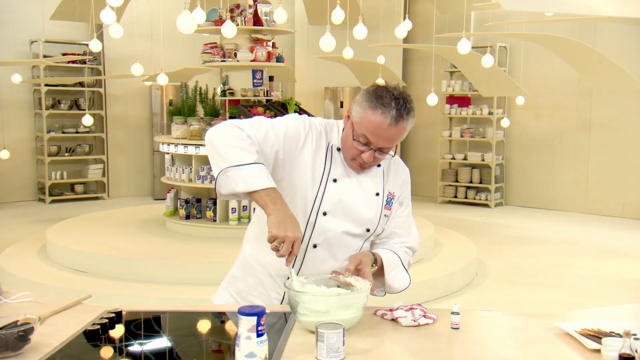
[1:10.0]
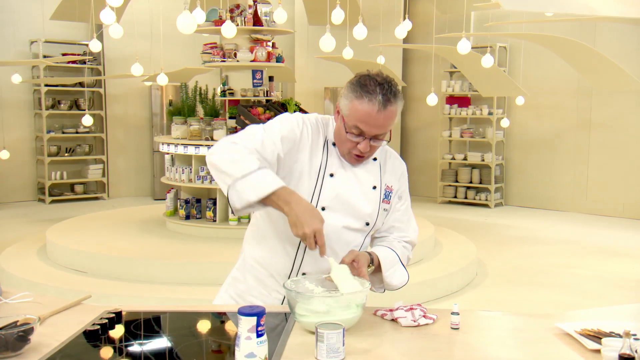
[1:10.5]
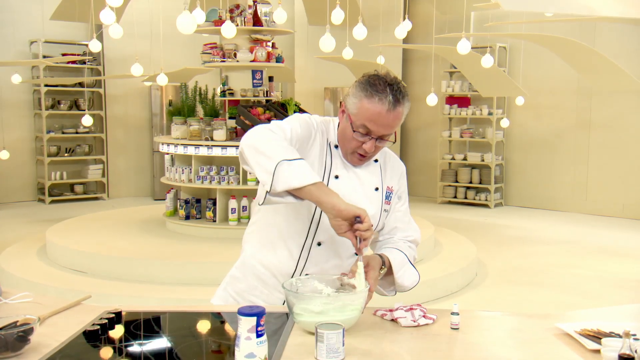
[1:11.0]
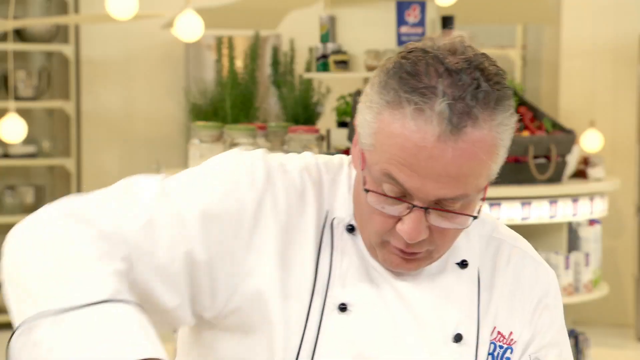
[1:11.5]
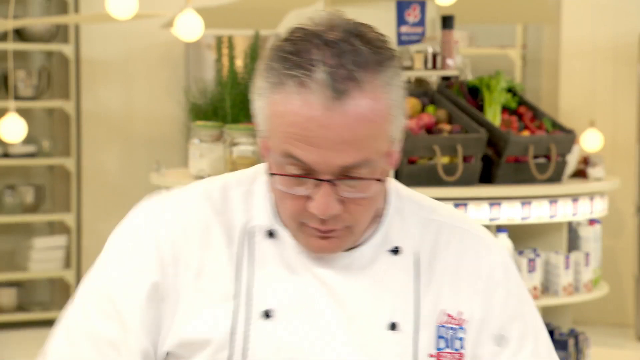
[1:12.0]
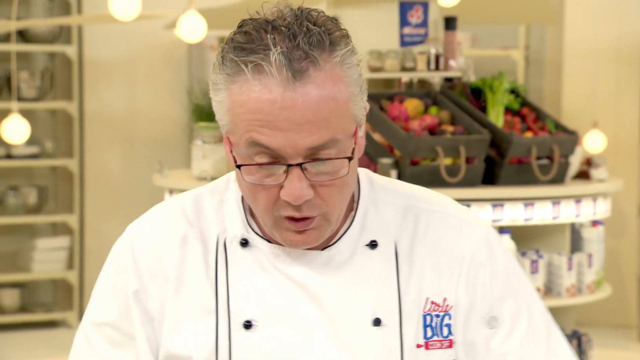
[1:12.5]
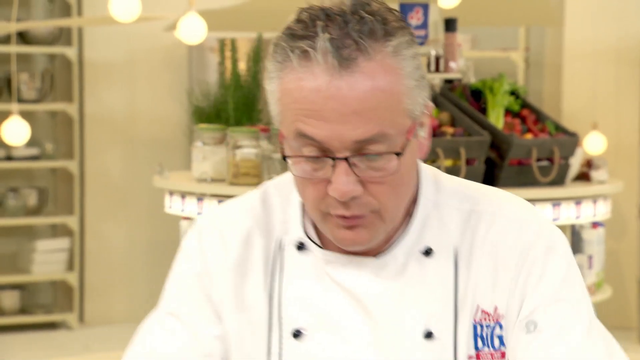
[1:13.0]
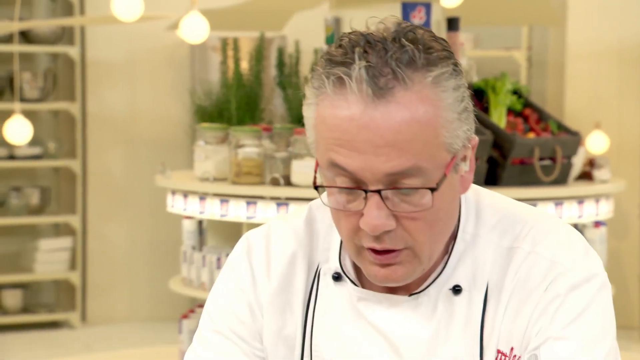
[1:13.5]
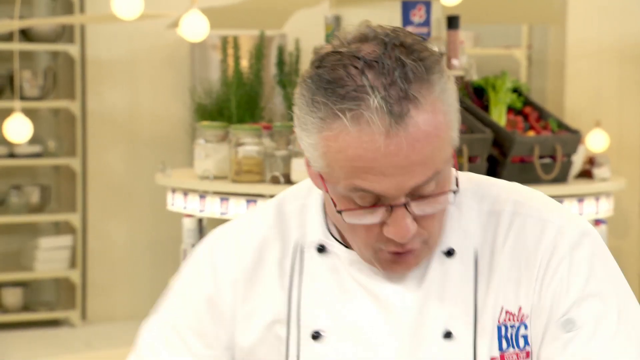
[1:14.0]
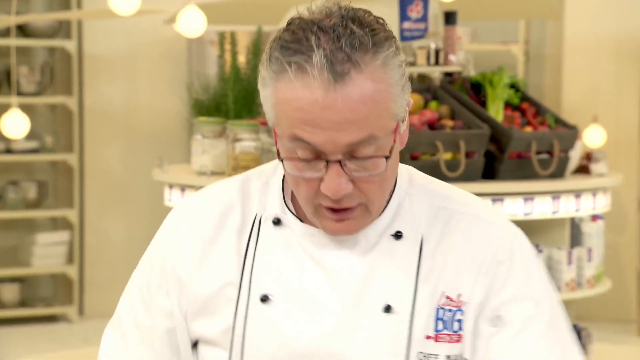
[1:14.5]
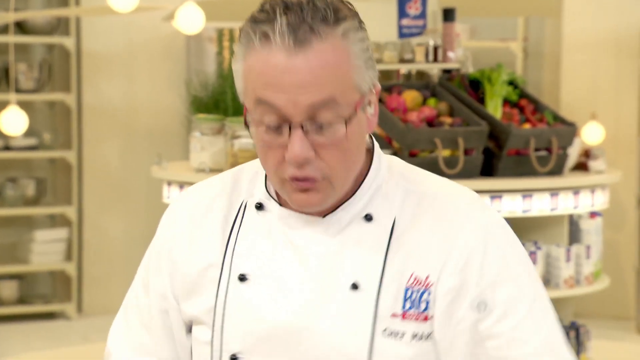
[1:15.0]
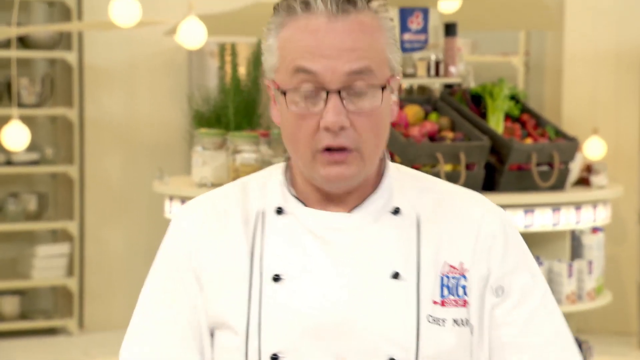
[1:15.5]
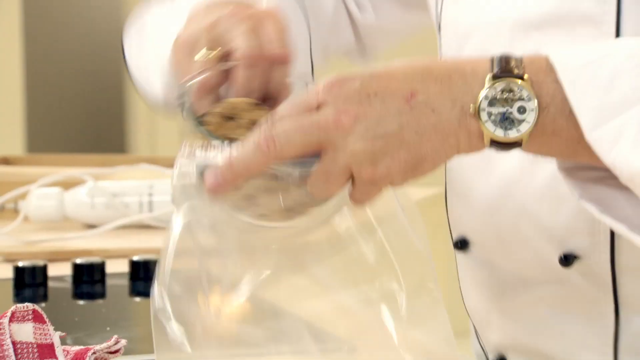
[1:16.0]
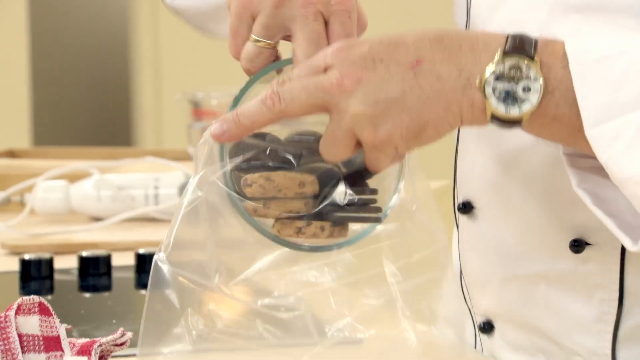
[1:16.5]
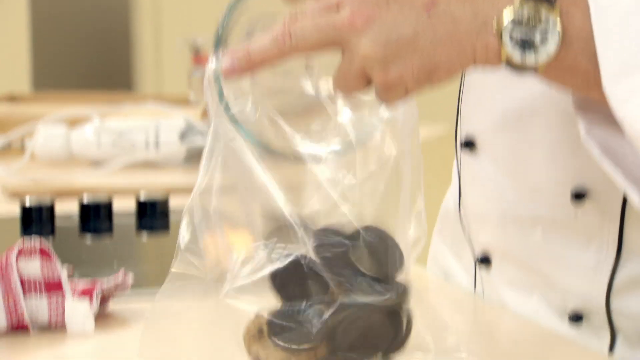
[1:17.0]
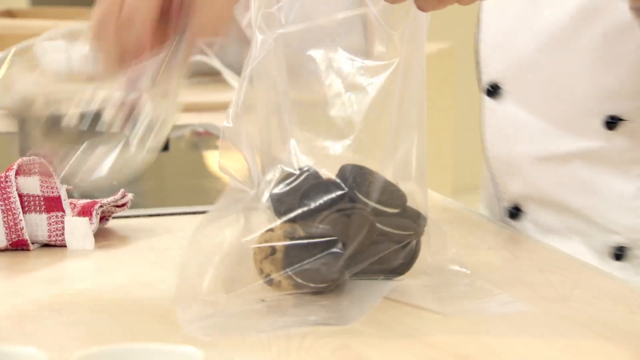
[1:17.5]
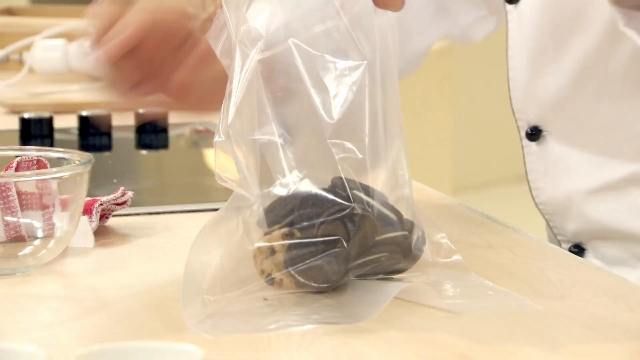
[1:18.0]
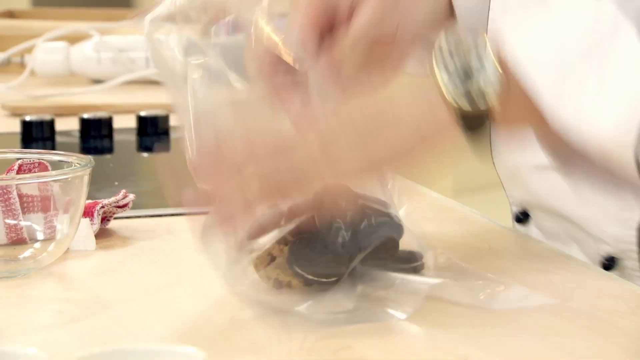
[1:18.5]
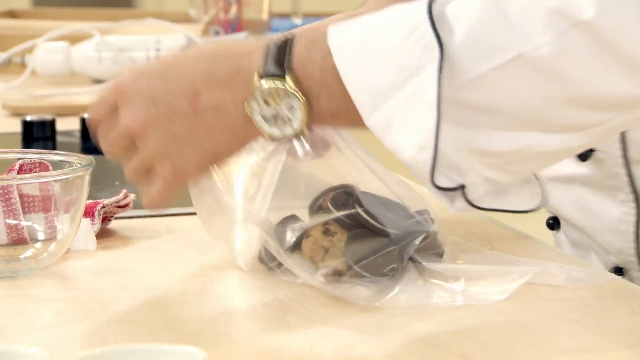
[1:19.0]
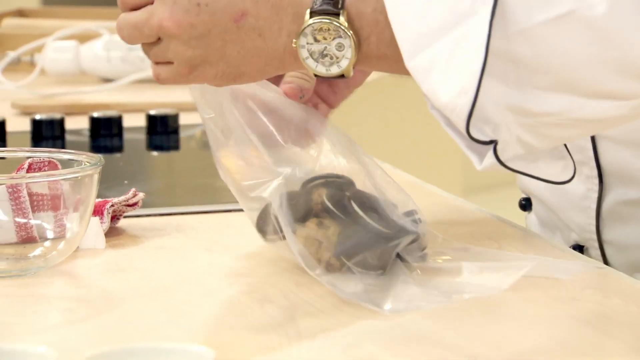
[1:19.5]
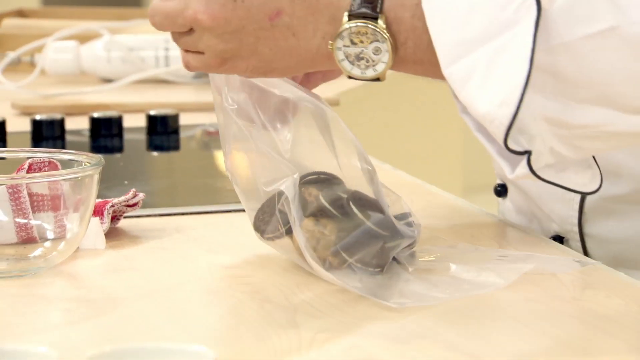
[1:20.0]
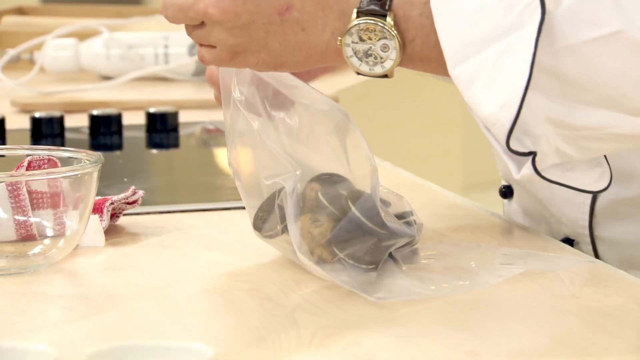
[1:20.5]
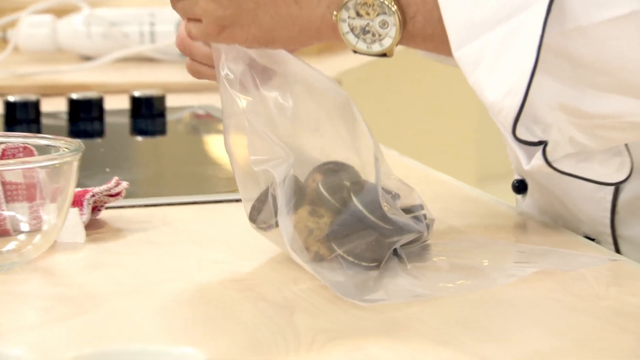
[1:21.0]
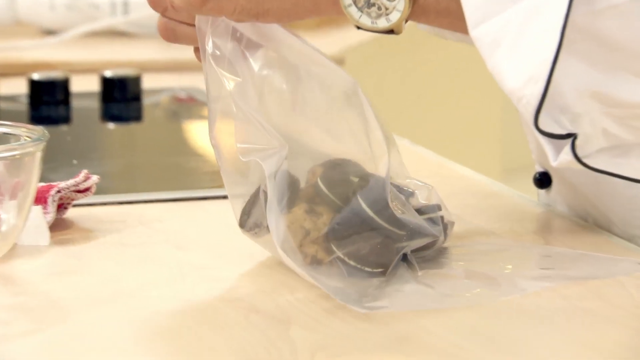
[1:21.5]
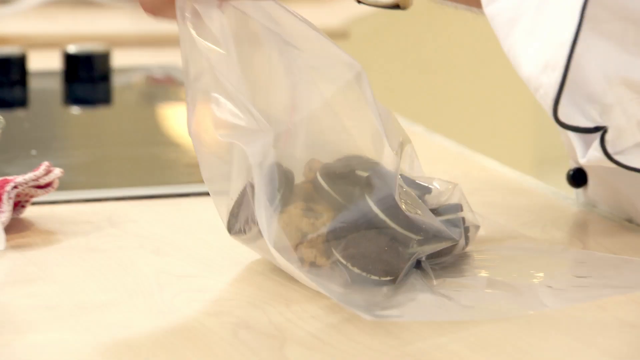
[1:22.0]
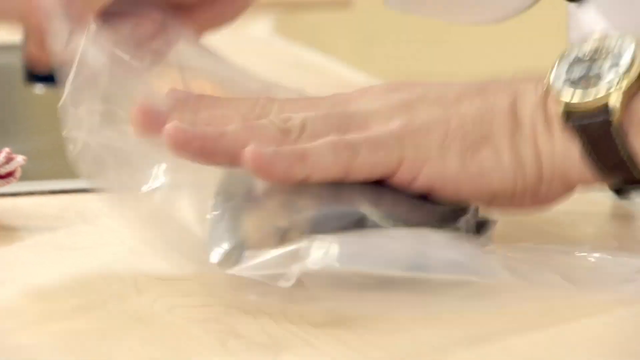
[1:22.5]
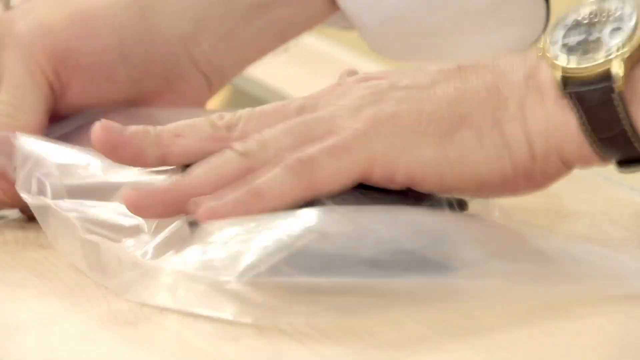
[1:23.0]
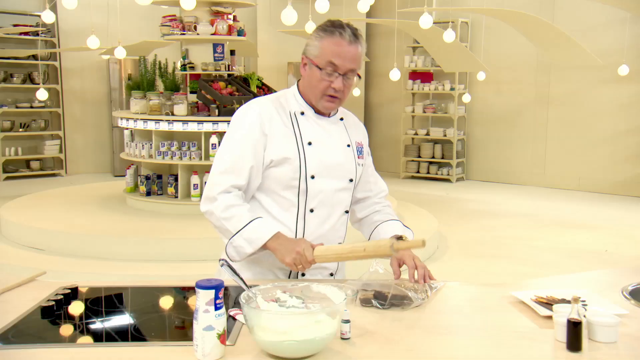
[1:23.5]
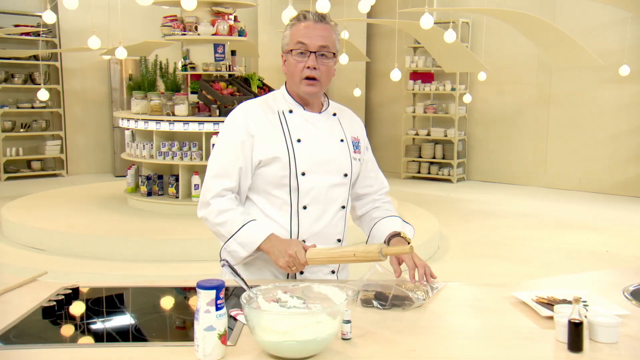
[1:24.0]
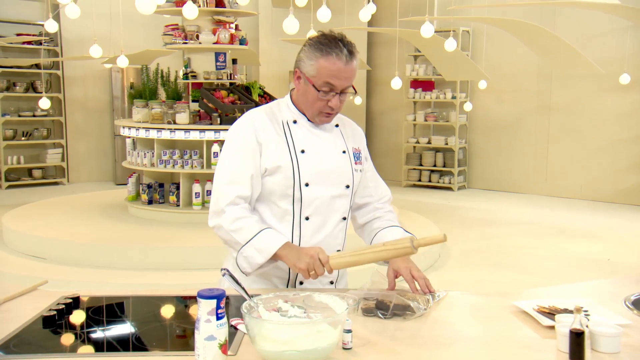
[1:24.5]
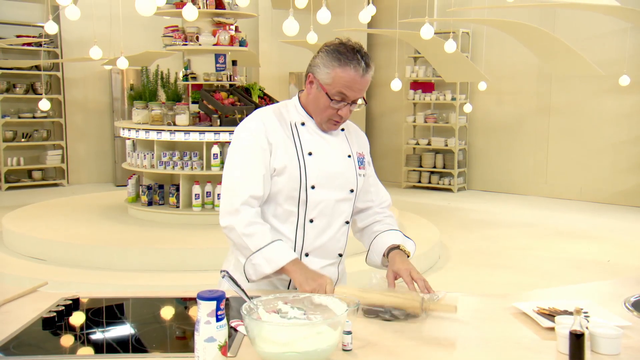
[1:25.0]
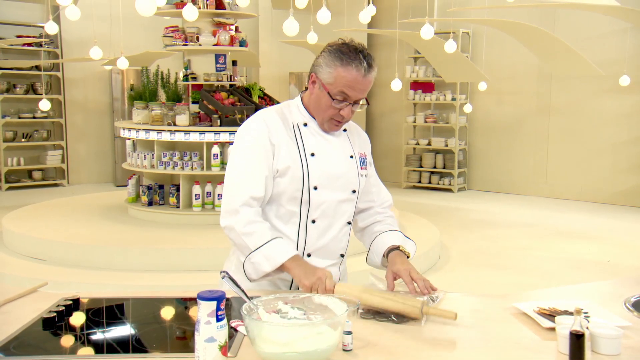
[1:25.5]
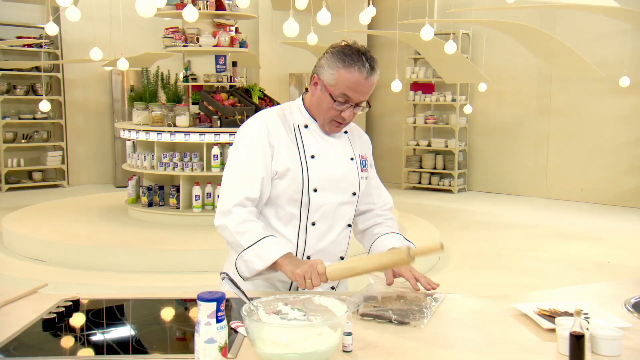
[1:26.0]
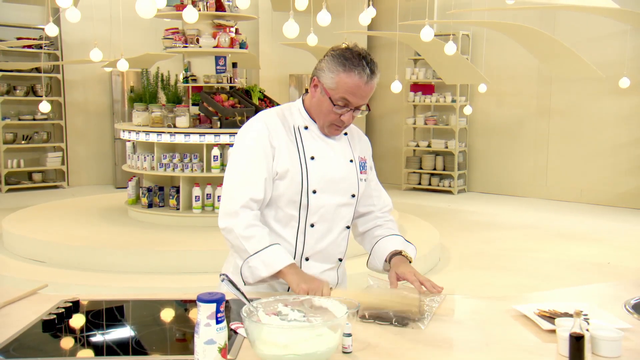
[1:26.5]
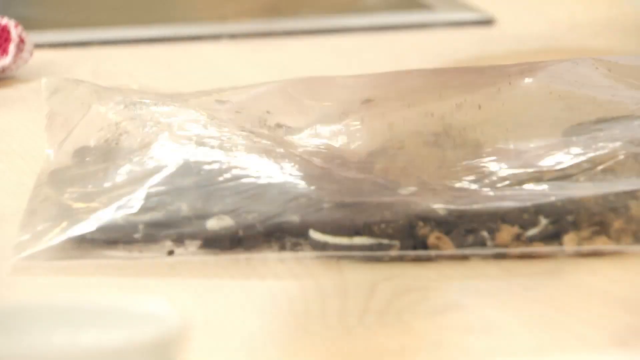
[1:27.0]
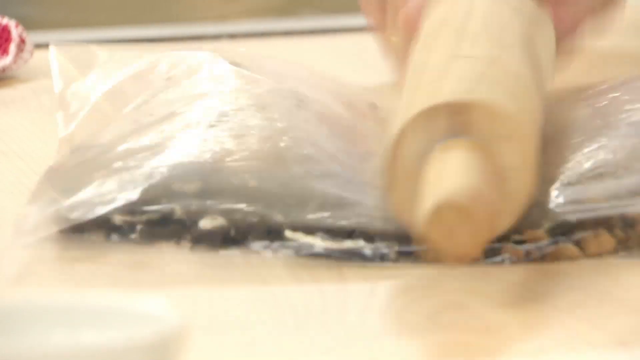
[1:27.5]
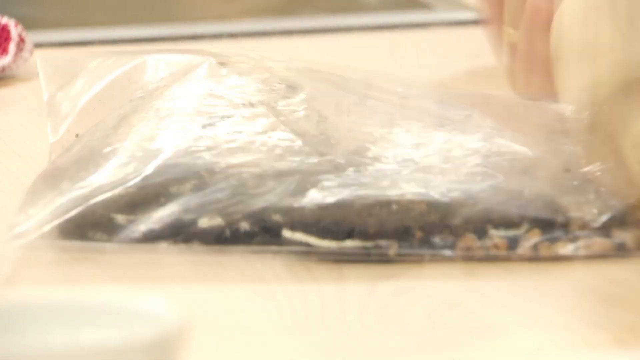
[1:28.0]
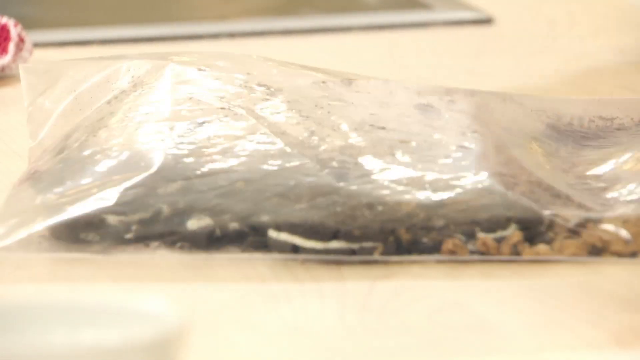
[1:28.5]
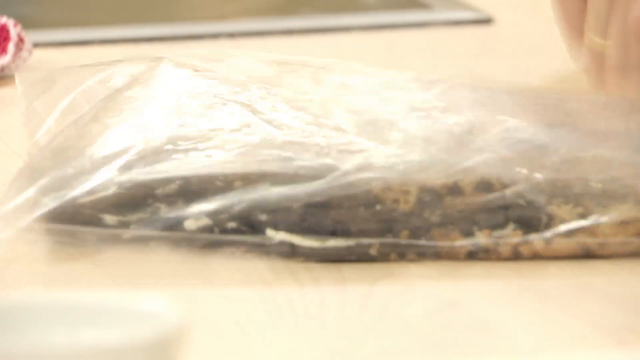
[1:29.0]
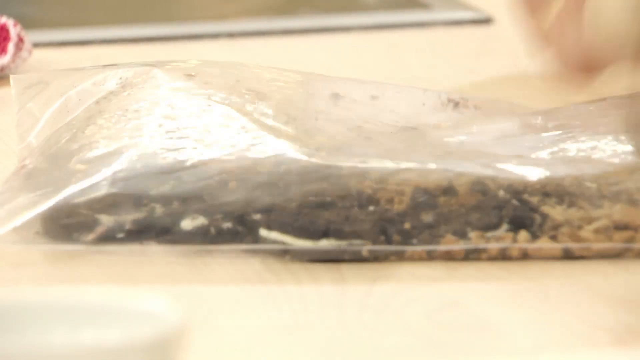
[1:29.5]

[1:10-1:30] The chef holds a clear bowl in one hand and a spatula in the other, mixing the whipped cream. The camera zooms in on him from the shoulders up as he looks down and speaks, then he picks up a small clear bowl of cookies: what look like Oreos, brown with a white cream middle, along with some chocolate chip cookies. He pours all the cookies into a plastic bag and closes the top. The camera zooms in on the bag of cookies as he sort of flattens them with his hand, then he takes a rolling pin and smacks it over the bag to break the cookies into crumbs inside it.